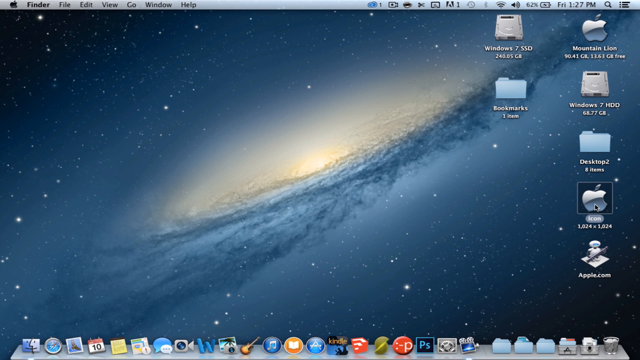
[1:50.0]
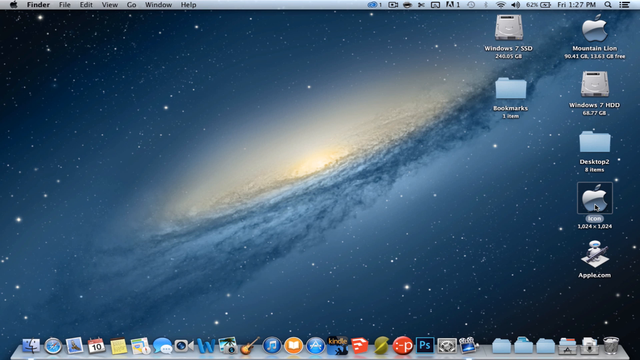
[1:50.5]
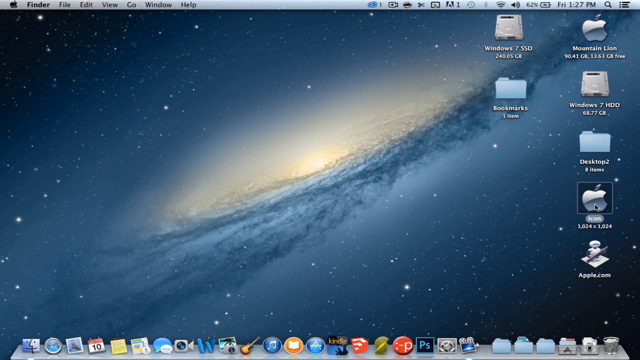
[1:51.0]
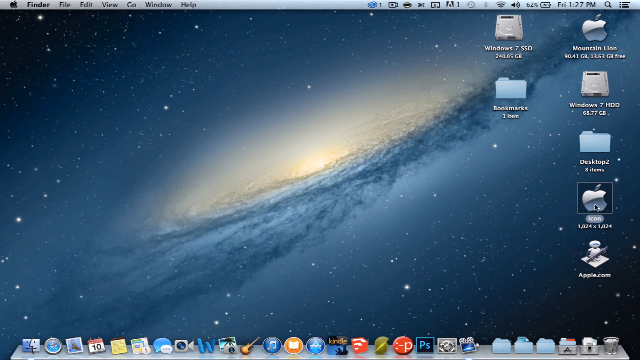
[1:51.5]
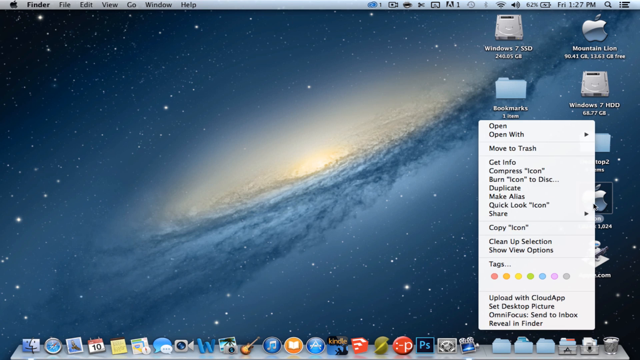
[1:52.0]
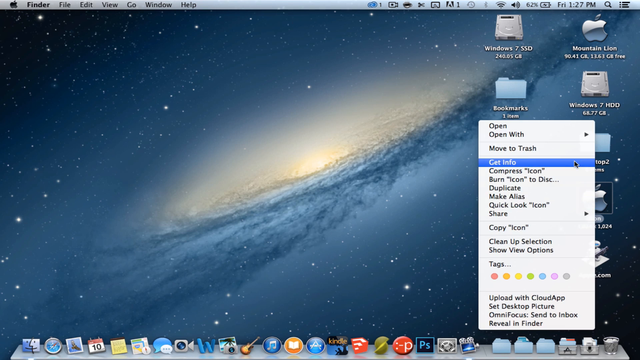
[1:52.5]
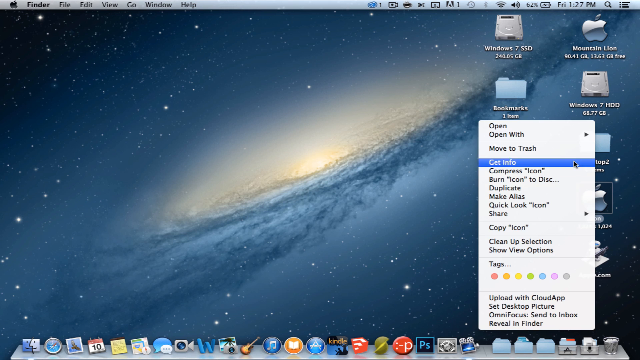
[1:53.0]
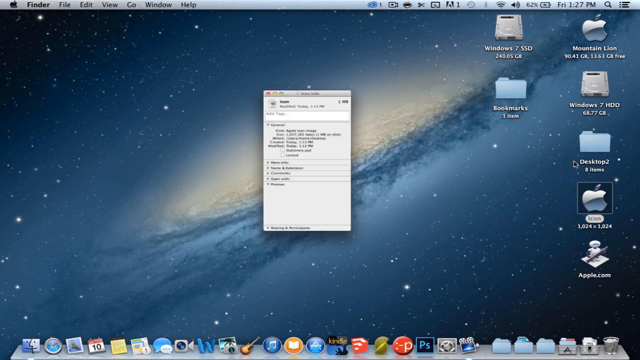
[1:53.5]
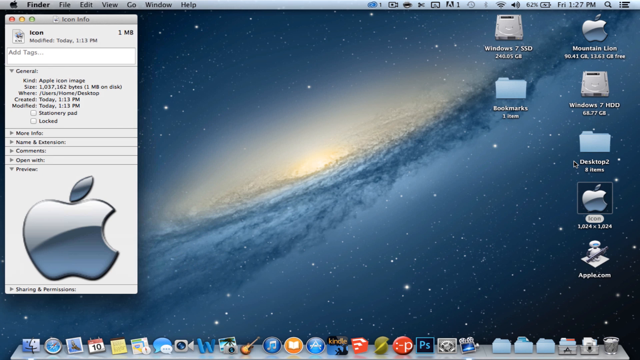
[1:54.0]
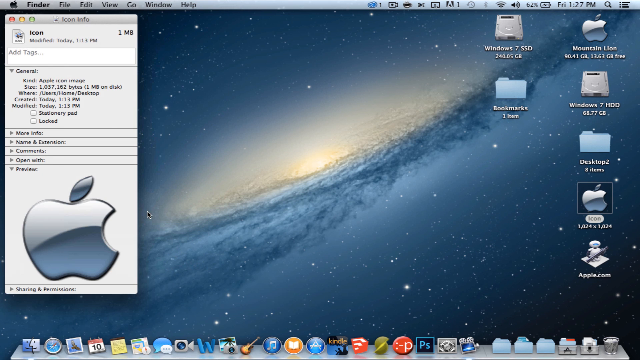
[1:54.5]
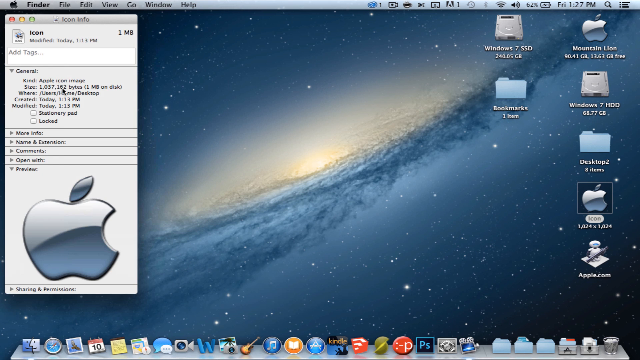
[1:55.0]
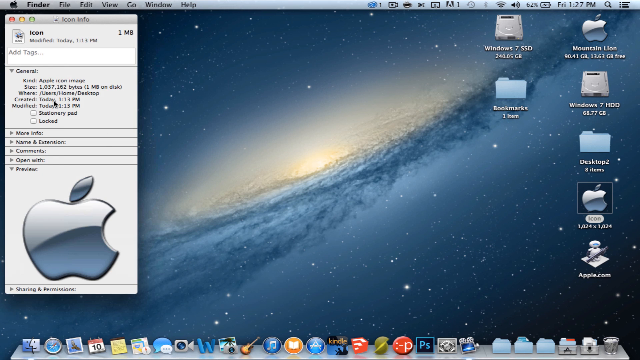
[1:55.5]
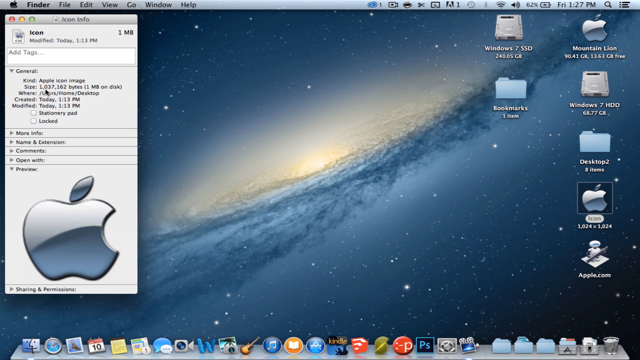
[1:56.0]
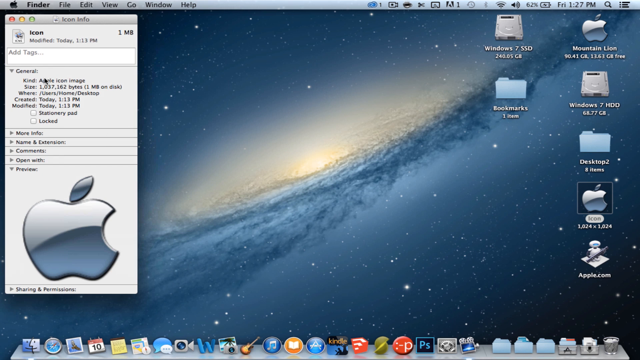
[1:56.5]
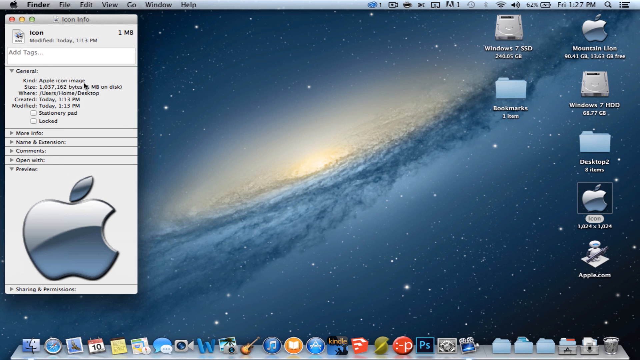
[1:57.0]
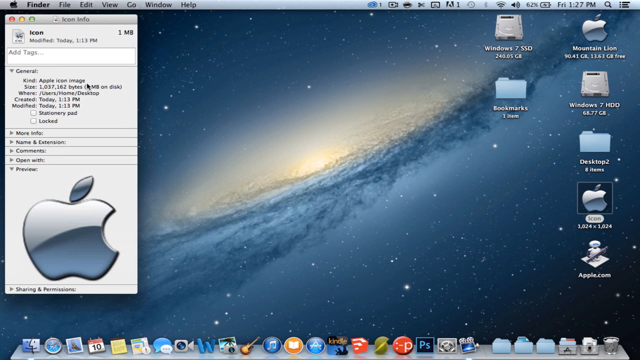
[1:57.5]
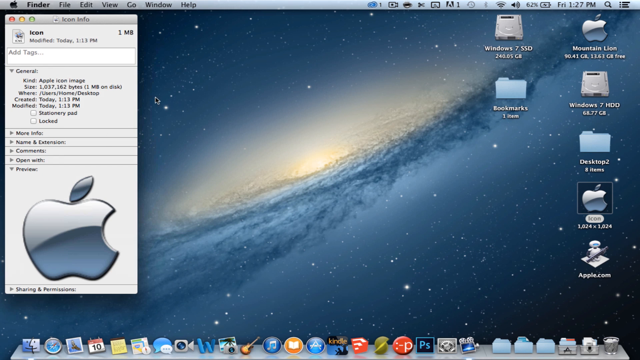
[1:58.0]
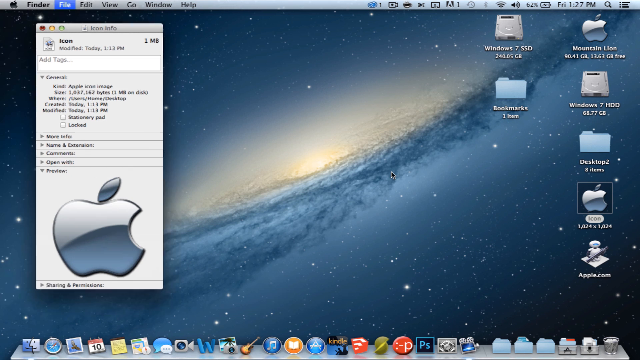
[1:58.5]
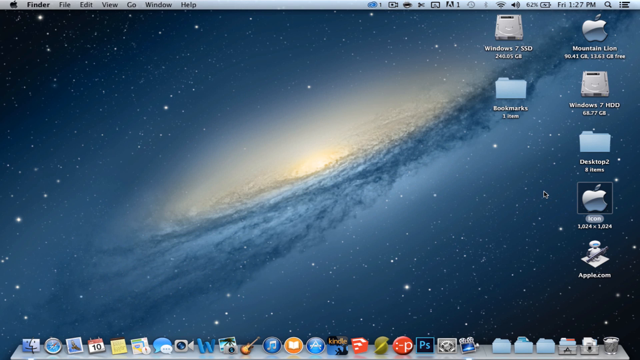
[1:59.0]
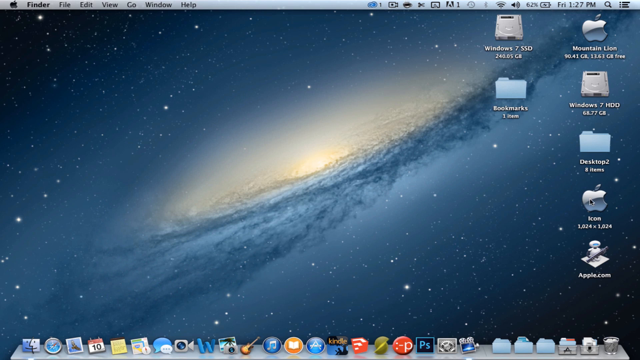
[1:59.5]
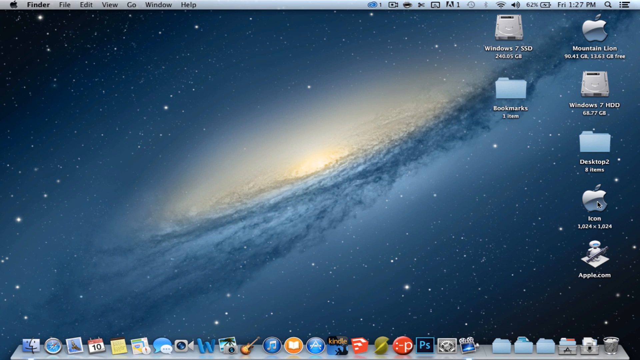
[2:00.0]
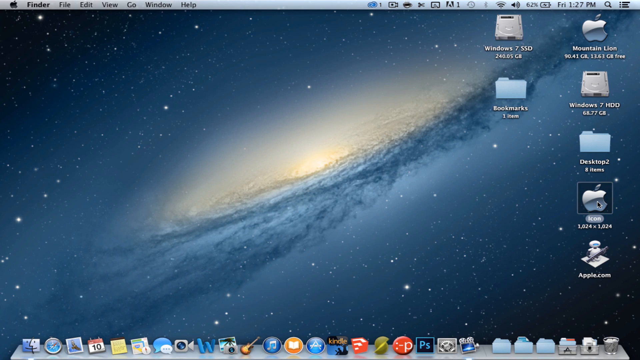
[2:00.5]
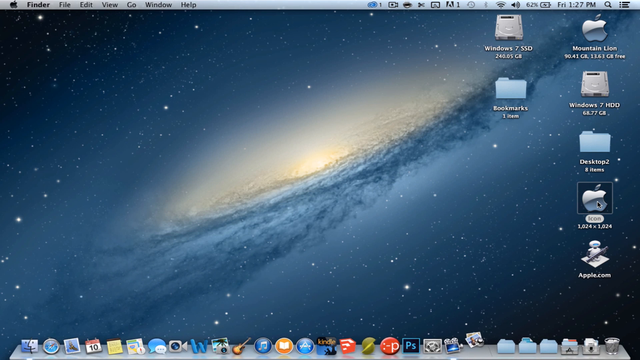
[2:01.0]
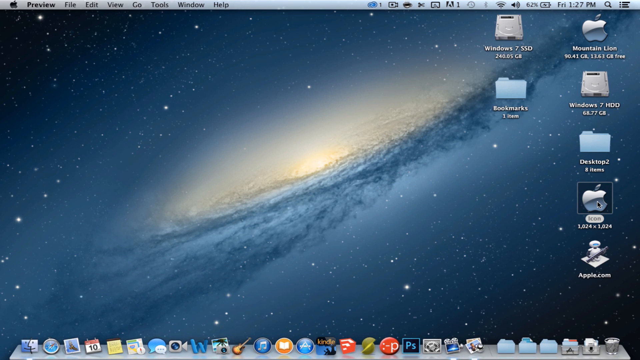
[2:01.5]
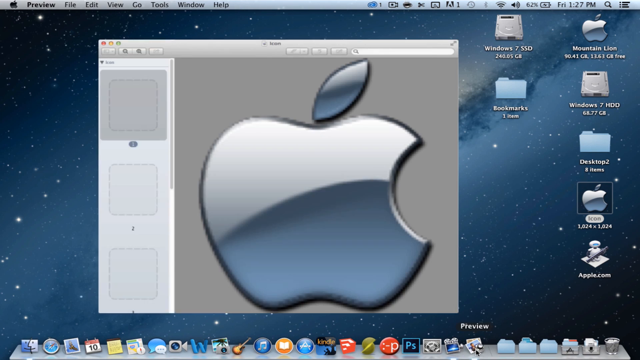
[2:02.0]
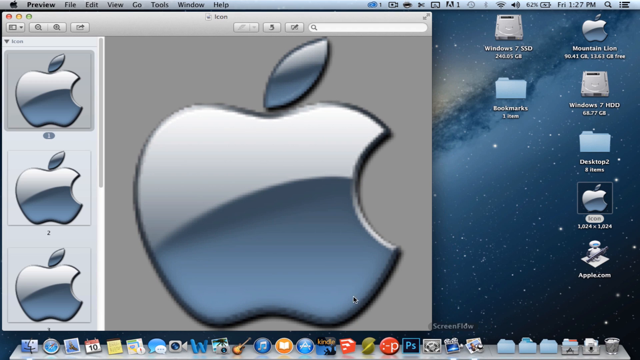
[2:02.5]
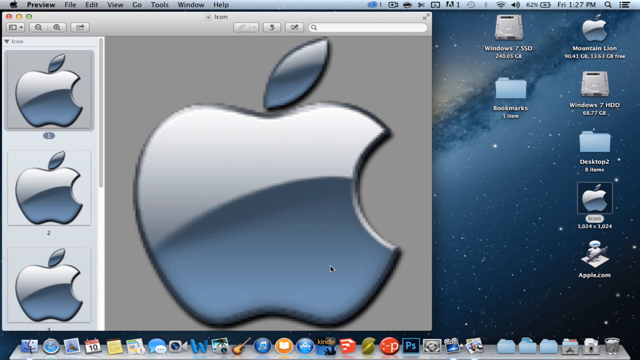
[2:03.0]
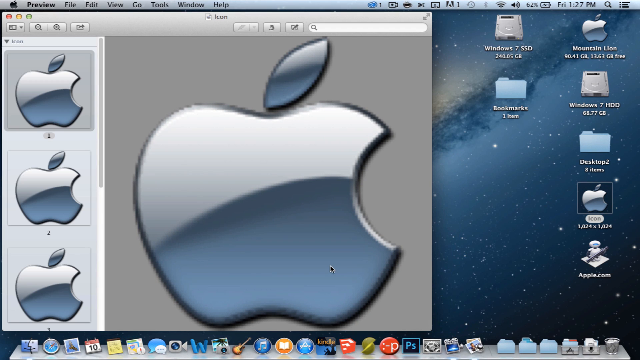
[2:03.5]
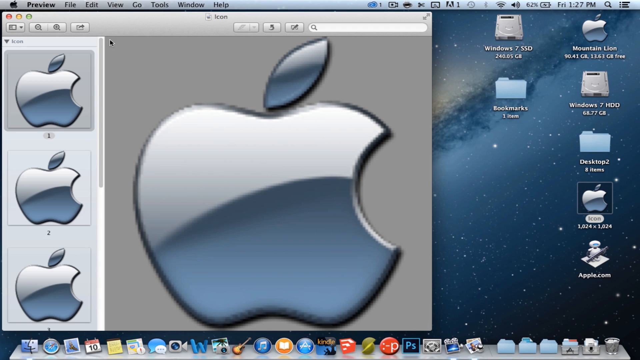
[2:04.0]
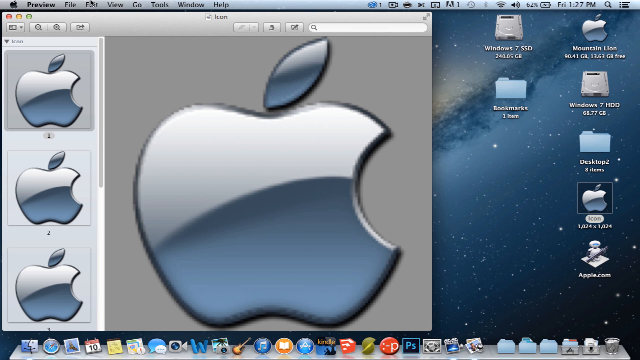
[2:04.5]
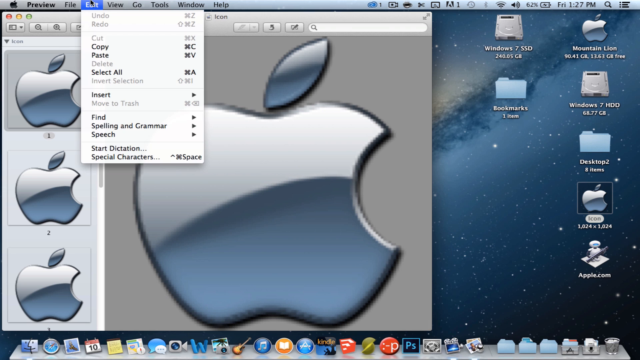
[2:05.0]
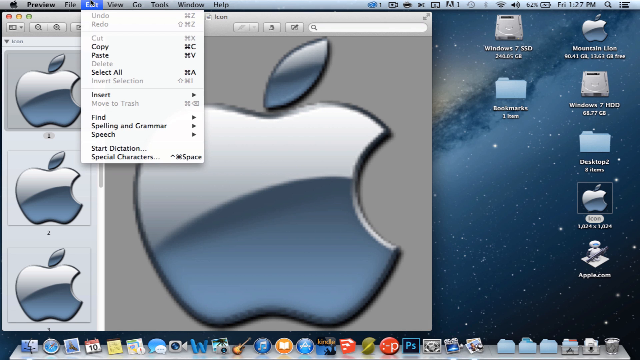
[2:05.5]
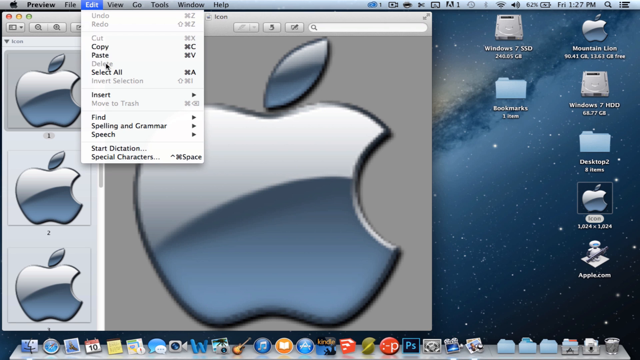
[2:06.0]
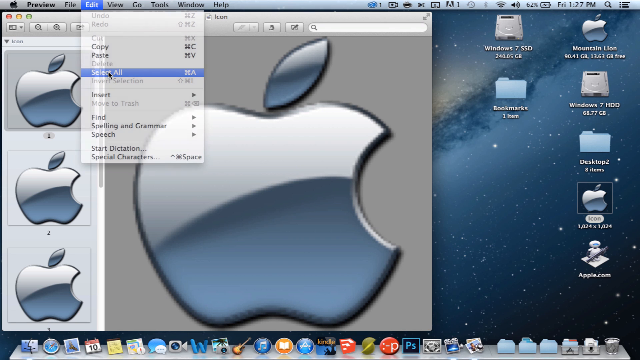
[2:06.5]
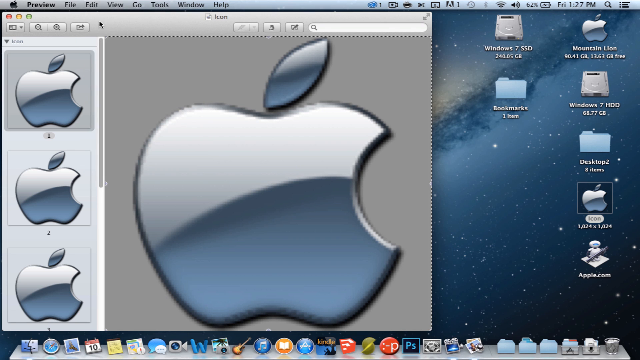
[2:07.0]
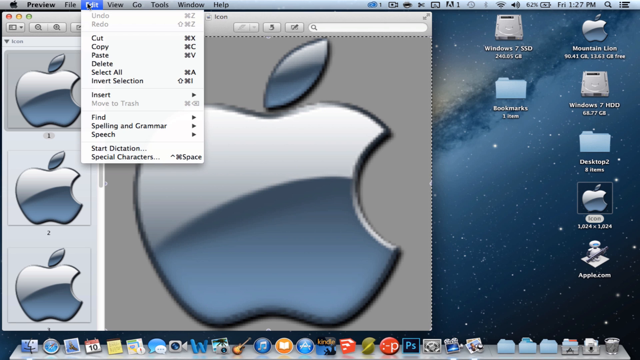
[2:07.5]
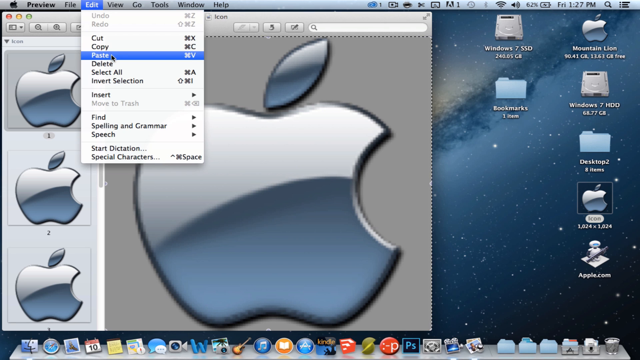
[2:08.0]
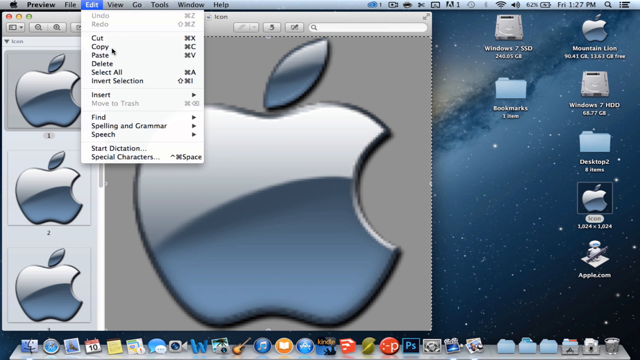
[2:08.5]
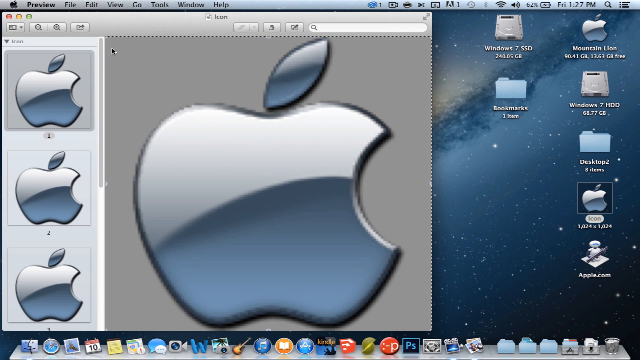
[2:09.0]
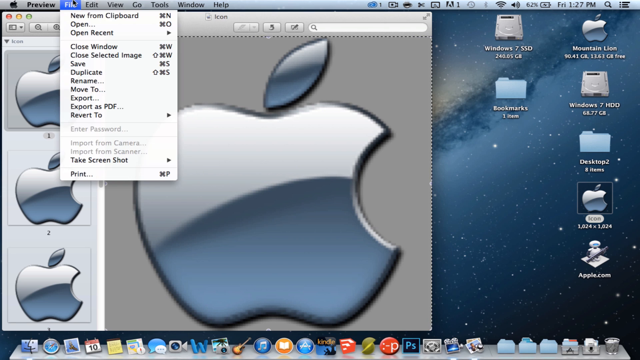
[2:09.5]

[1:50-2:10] The user right-clicks the original Apple shortcut icon on the desktop and selects Get Info from the context menu. A small information window appears in the top left corner of the screen showing general details about the file, such as name, kind, size and location. After briefly looking at it, the user closes the window. They then click the icon again, this time opening an image file that displays four different Apple logos, each with slightly varied designs, arranged in a grid-like formation in a Preview window. The user clicks and drags to select all four logos at once and then copies them, possibly using a keyboard shortcut or the Edit menu, apparently to customize the icon.